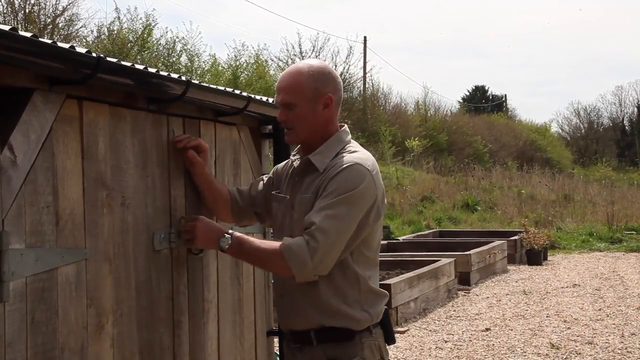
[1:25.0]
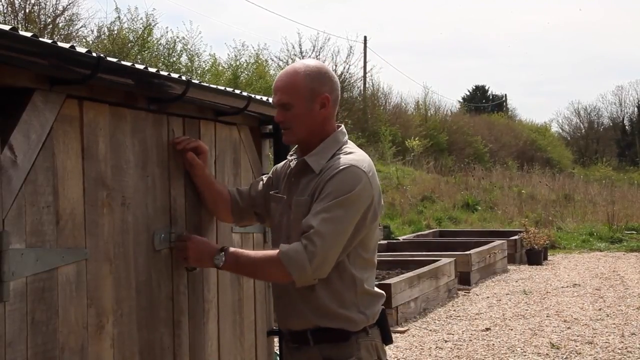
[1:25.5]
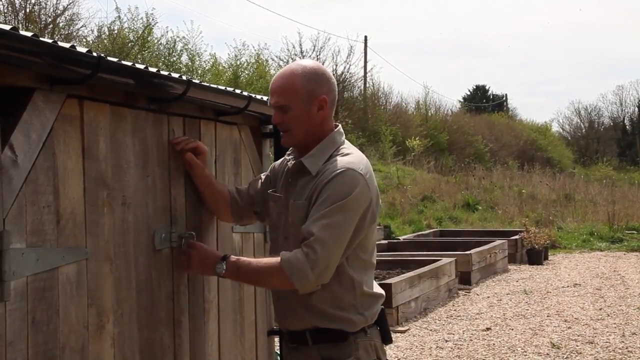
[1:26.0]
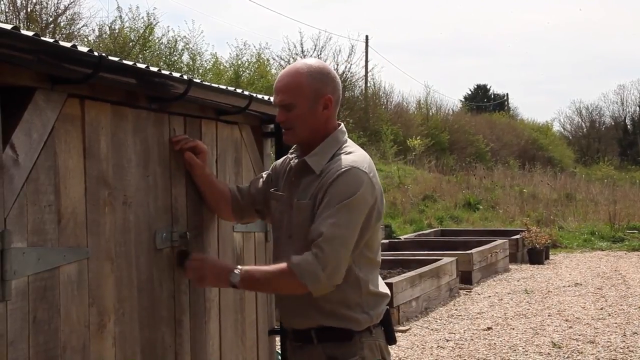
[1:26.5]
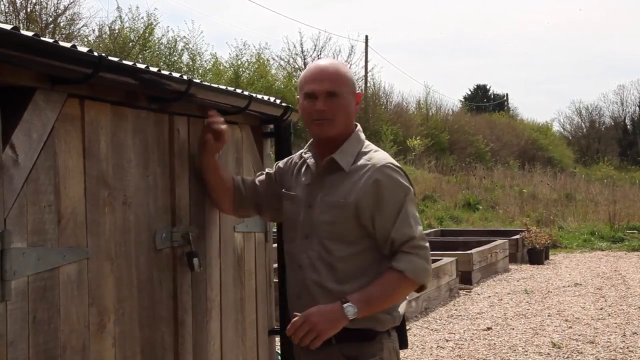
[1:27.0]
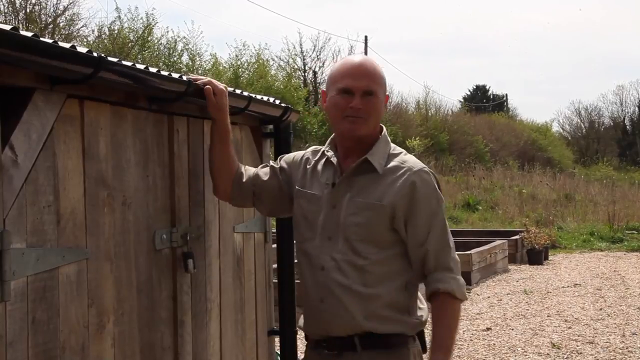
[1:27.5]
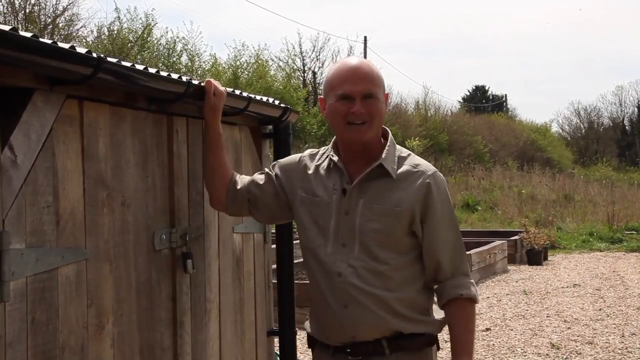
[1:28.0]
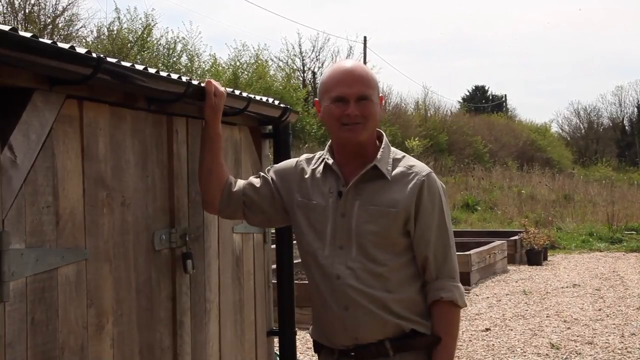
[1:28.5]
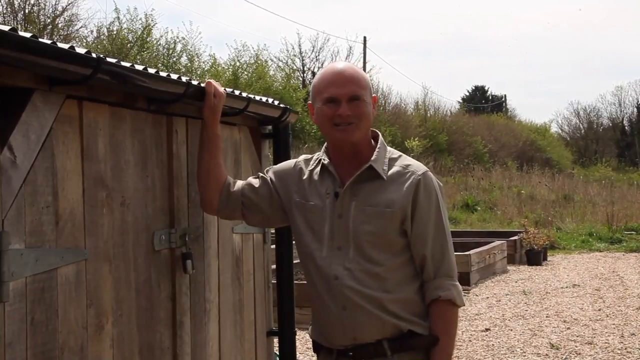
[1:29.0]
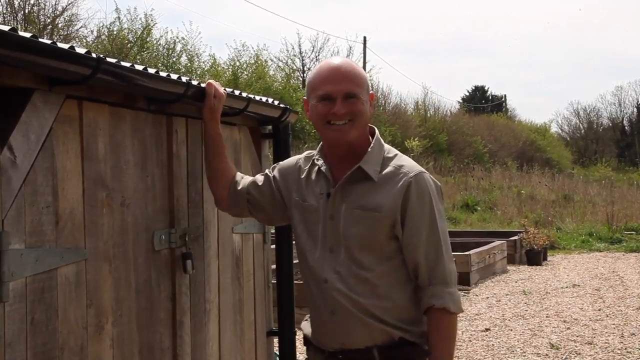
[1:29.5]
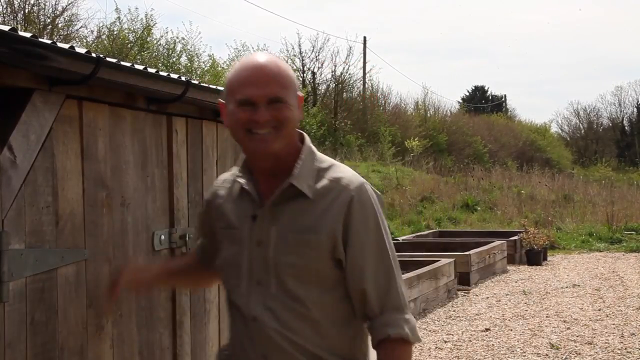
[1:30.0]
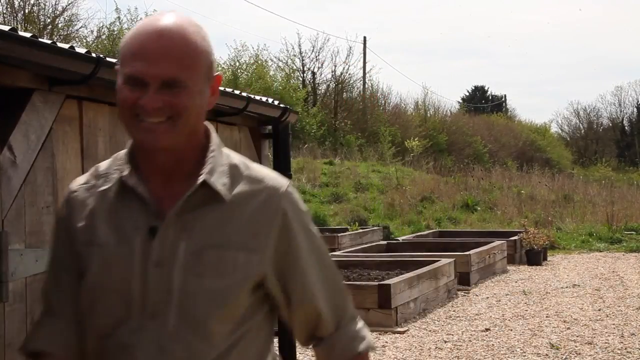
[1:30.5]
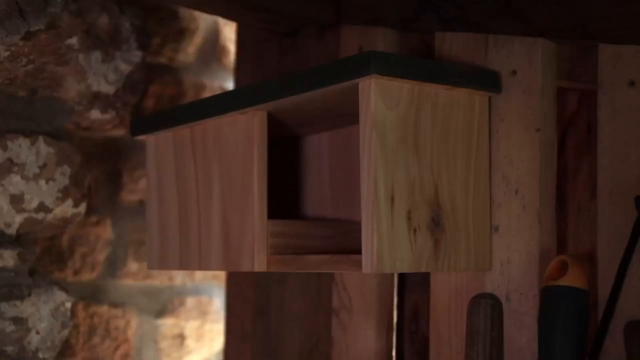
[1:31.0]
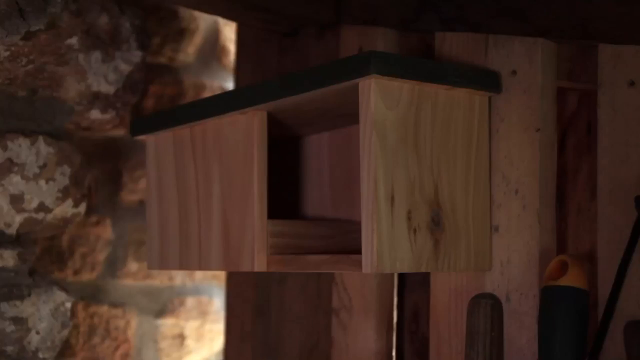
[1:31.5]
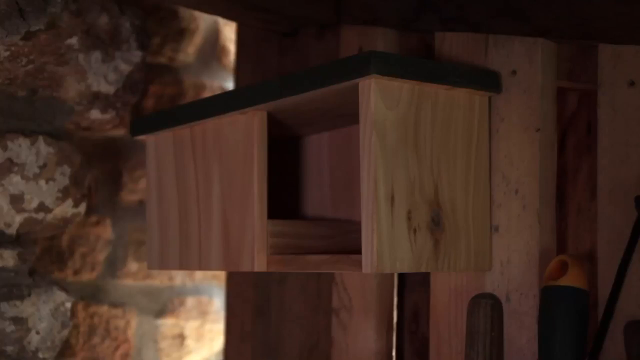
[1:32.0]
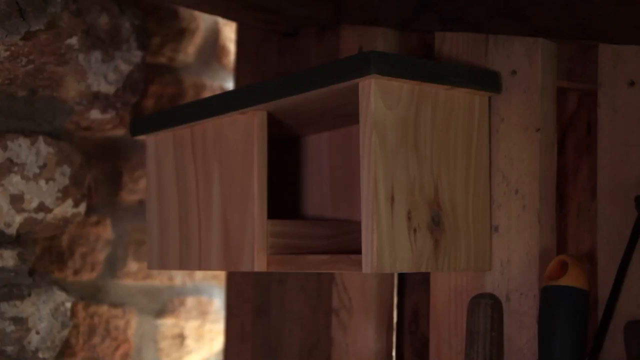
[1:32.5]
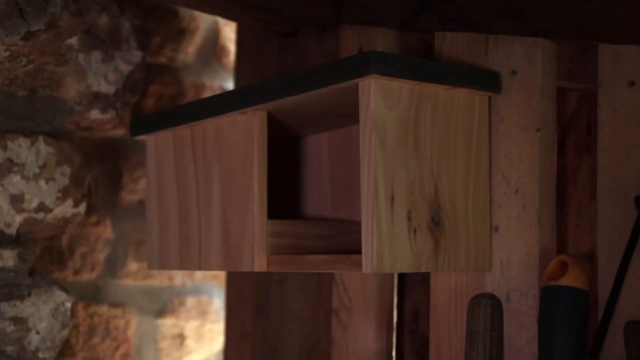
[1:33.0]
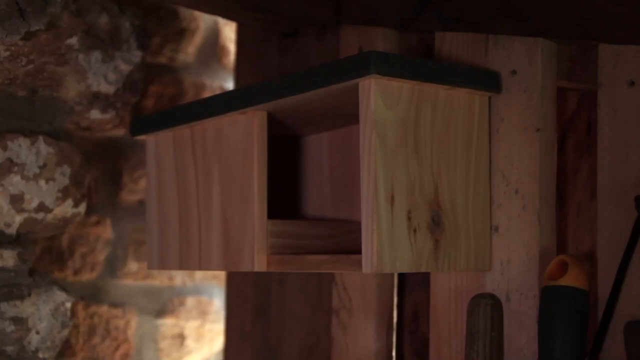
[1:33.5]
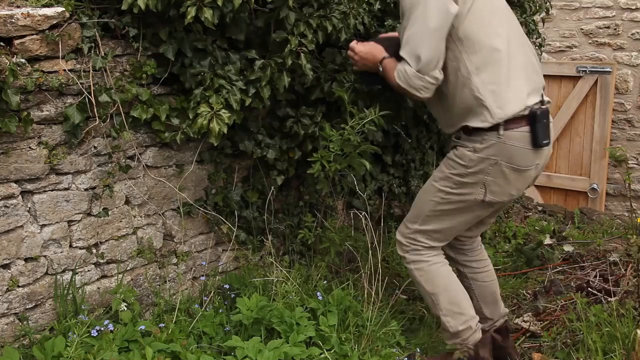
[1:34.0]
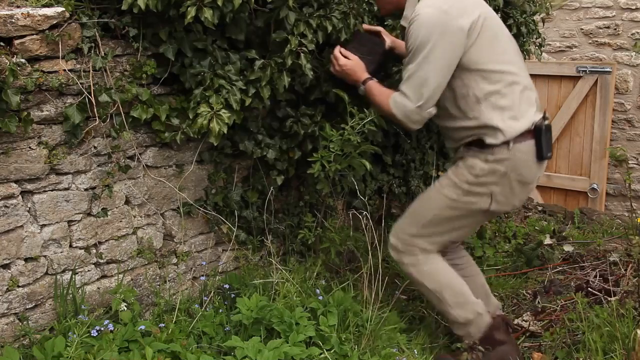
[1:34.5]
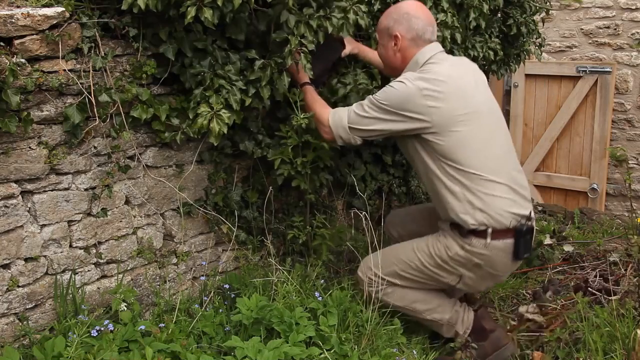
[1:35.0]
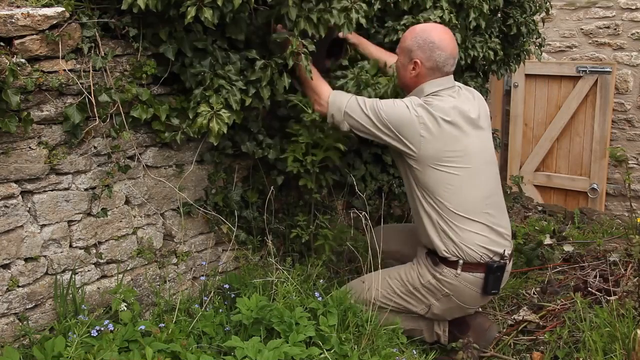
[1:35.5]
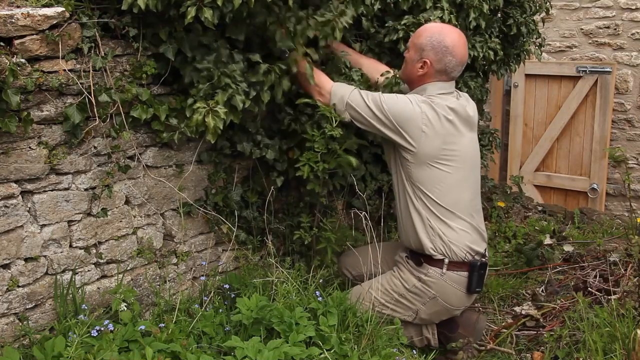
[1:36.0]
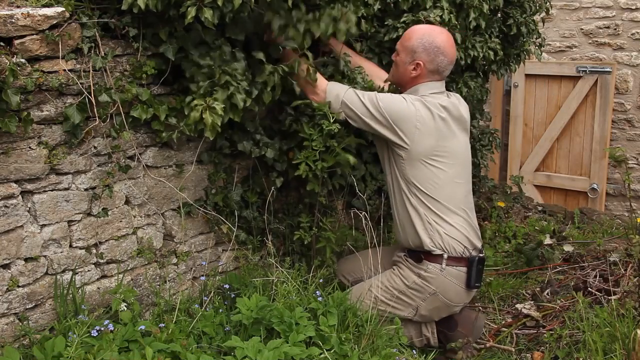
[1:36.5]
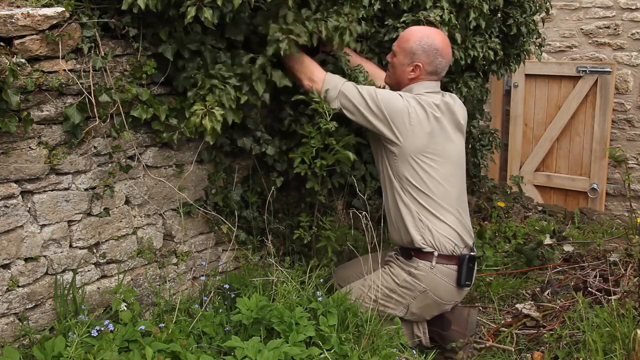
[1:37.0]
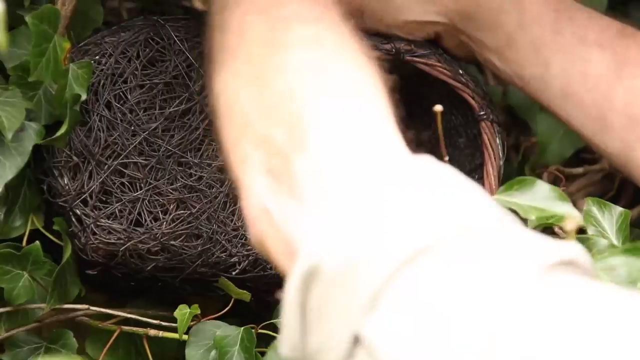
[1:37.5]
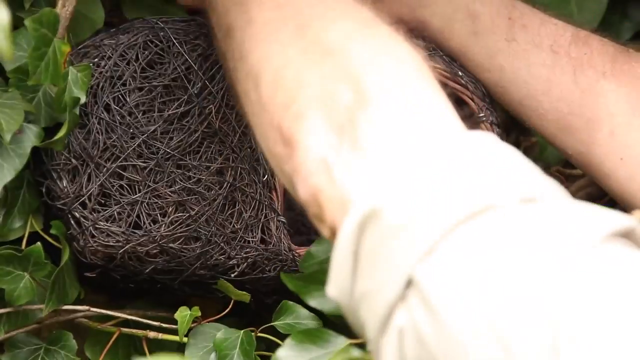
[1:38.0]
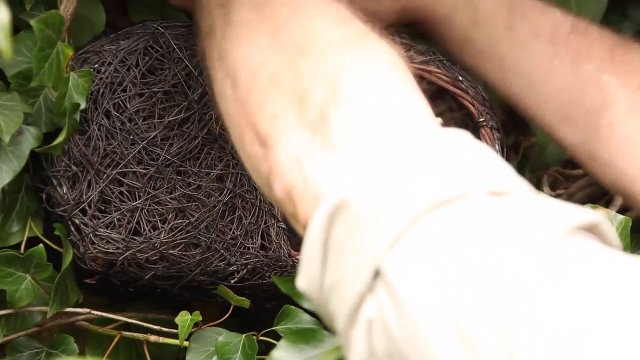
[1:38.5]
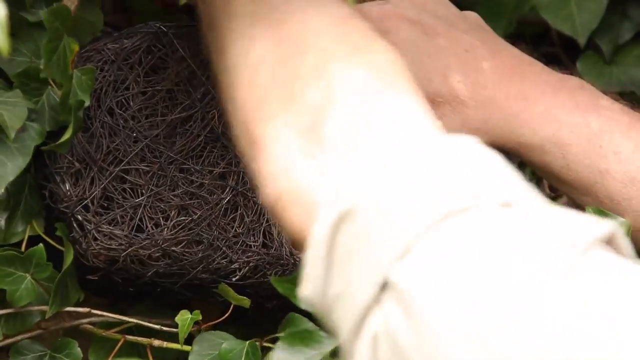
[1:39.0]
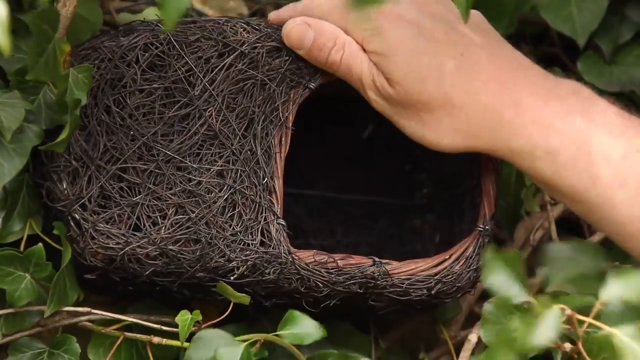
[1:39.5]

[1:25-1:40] After locking the door, the man comes outside smiling and walks over to another area of the building, where he hangs another wooden thing that looks like a net on the wall. There are green areas there. He appears to be setting up these things to provide a home for birds. He looks very happy and jovial. He wears a cotton-coloured shirt and cotton-coloured trousers, and a mic is visible at the back of his pocket.